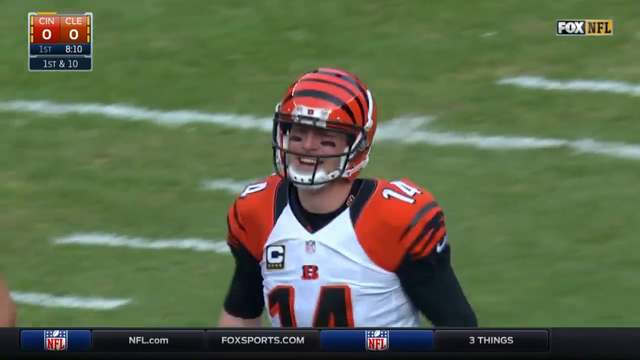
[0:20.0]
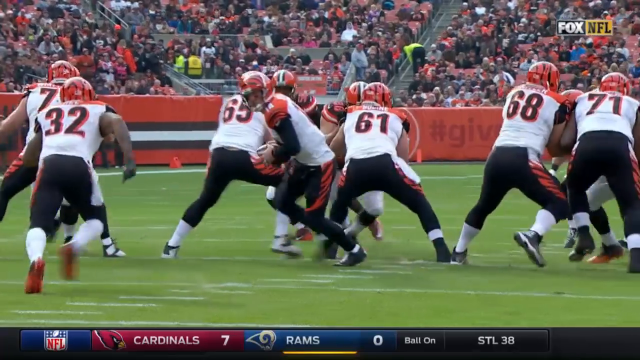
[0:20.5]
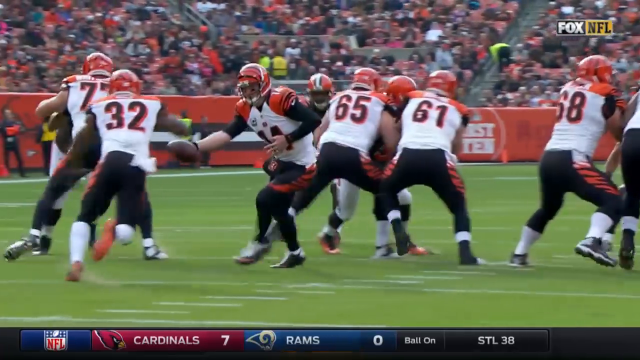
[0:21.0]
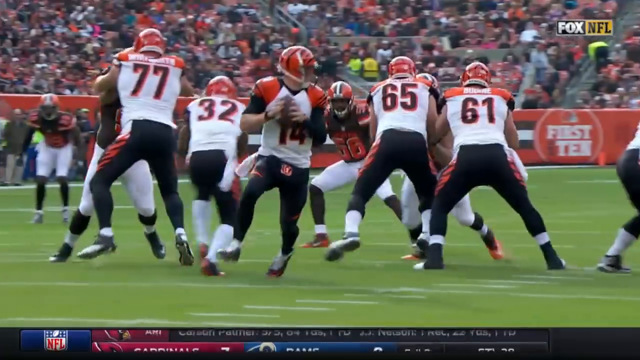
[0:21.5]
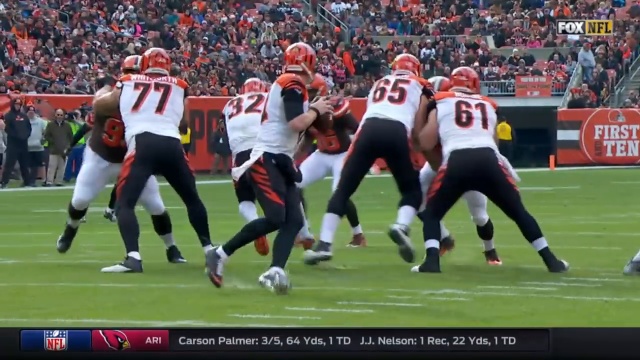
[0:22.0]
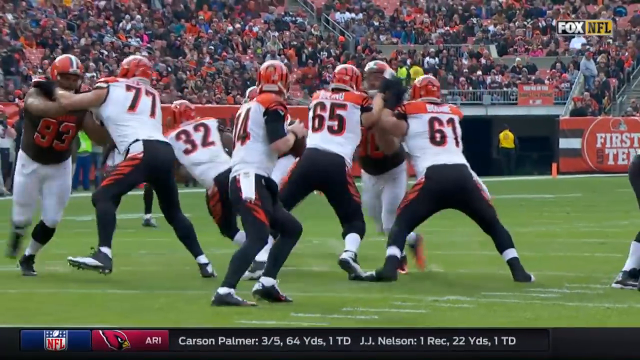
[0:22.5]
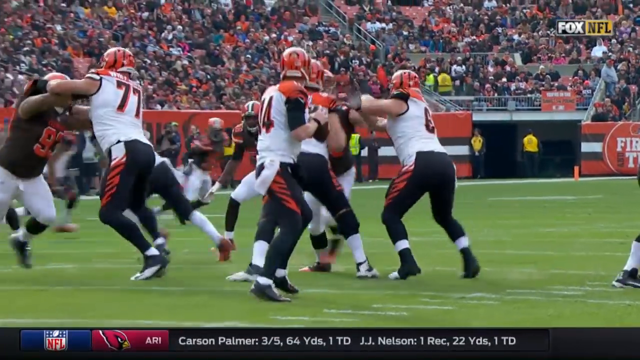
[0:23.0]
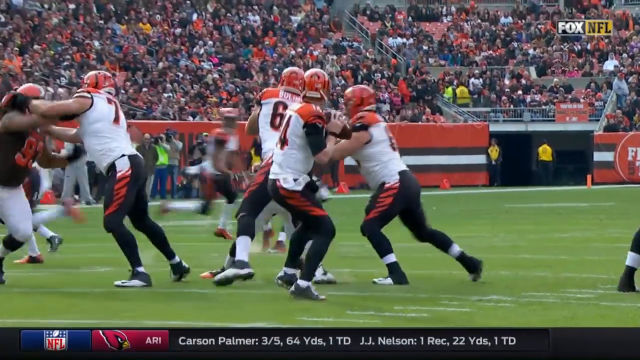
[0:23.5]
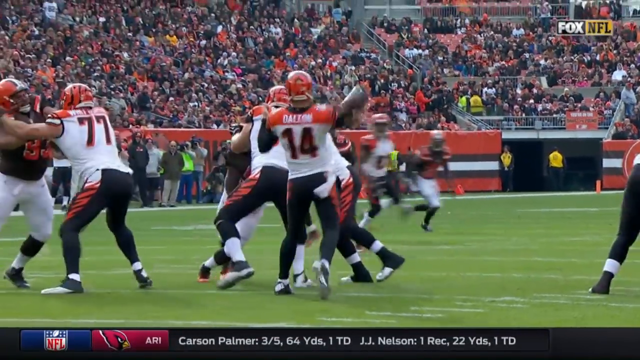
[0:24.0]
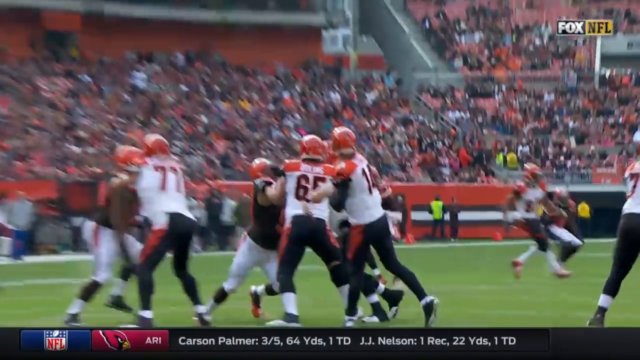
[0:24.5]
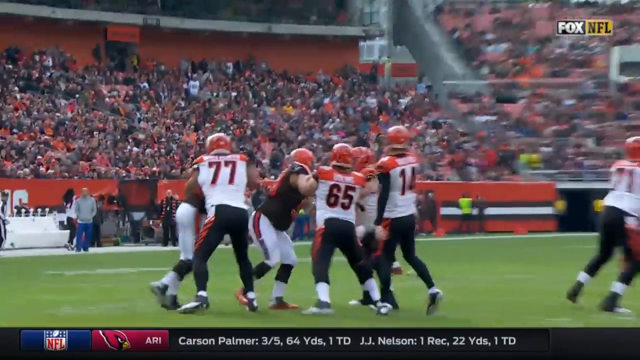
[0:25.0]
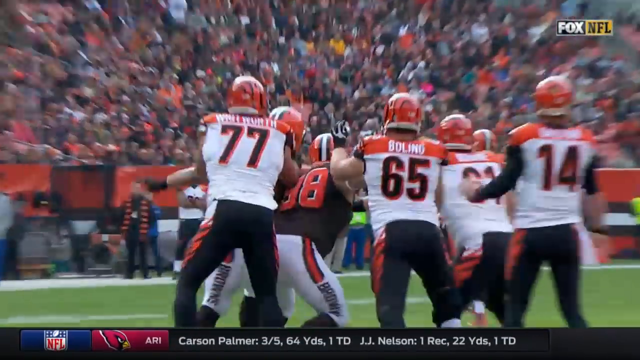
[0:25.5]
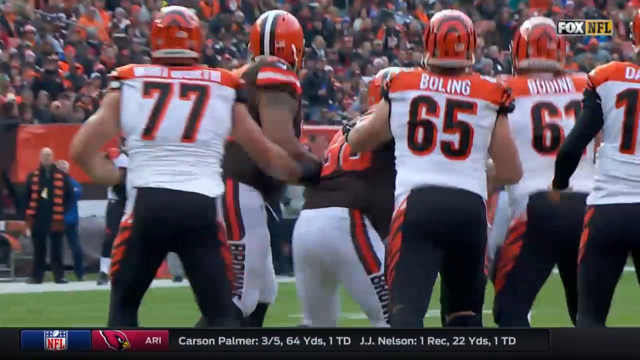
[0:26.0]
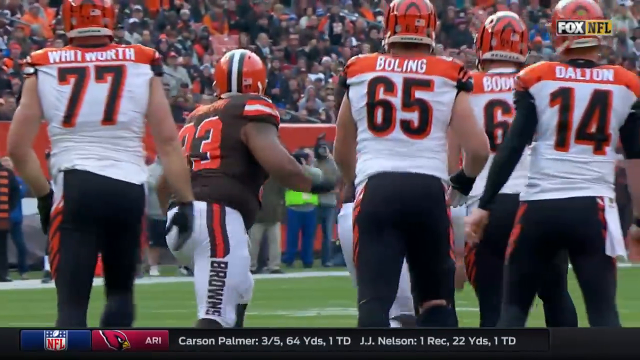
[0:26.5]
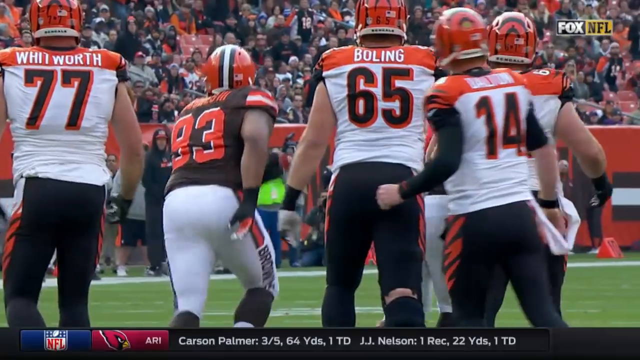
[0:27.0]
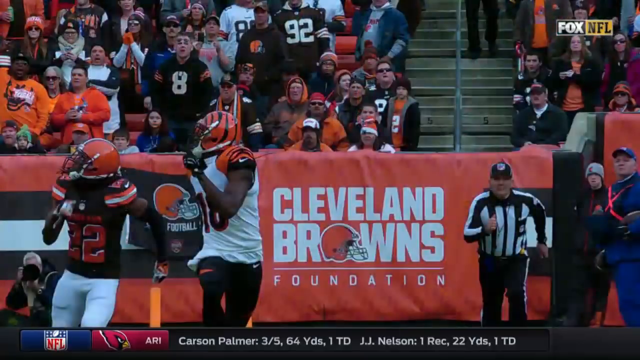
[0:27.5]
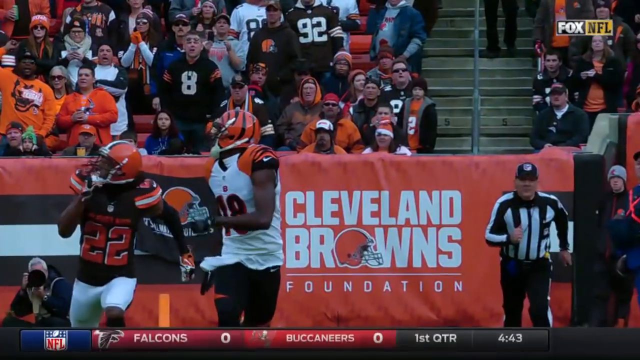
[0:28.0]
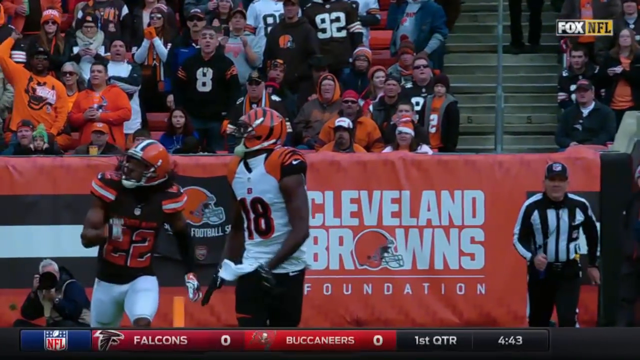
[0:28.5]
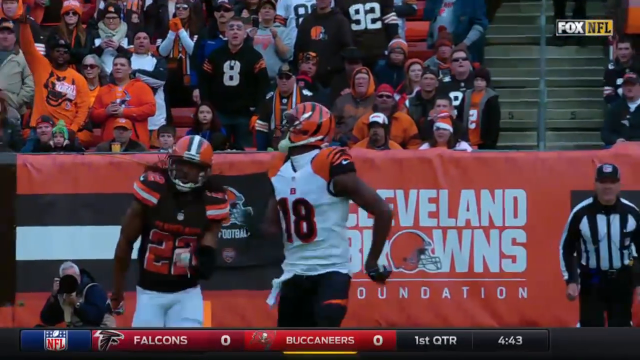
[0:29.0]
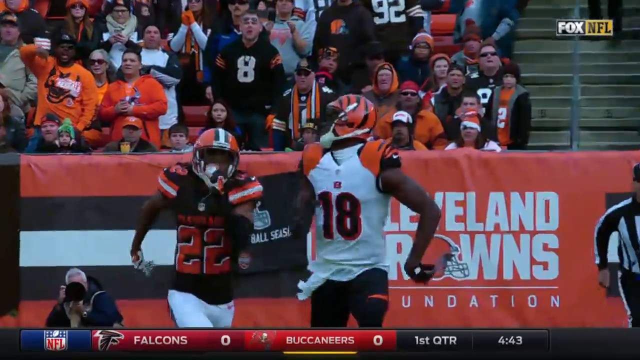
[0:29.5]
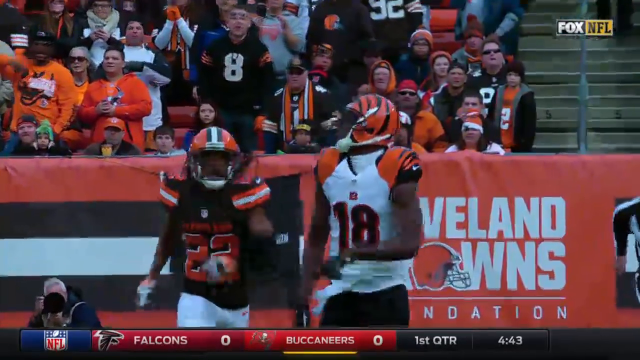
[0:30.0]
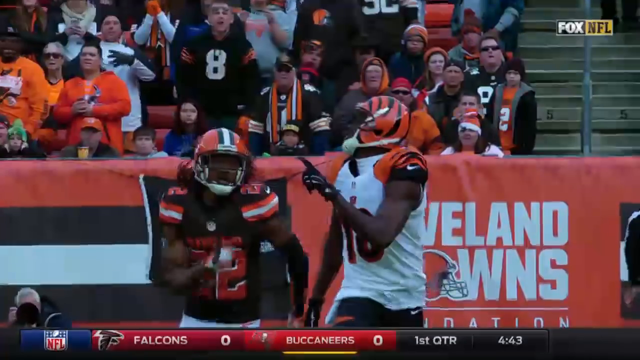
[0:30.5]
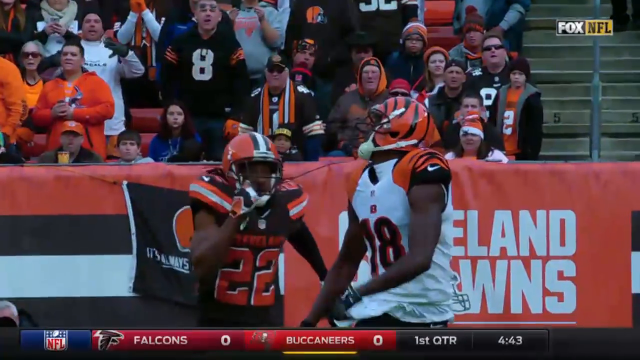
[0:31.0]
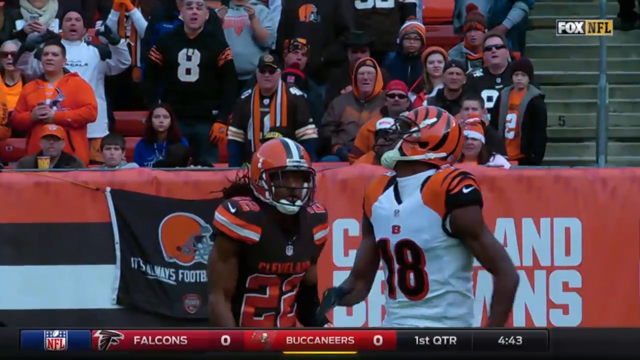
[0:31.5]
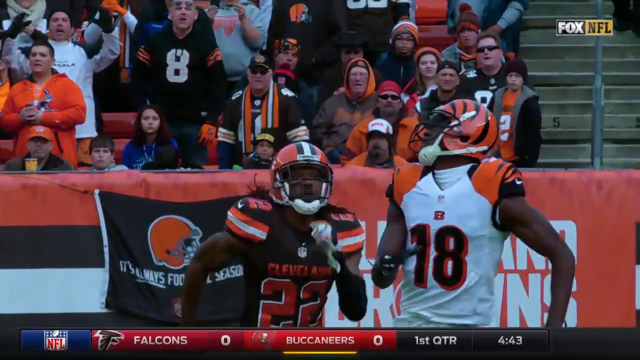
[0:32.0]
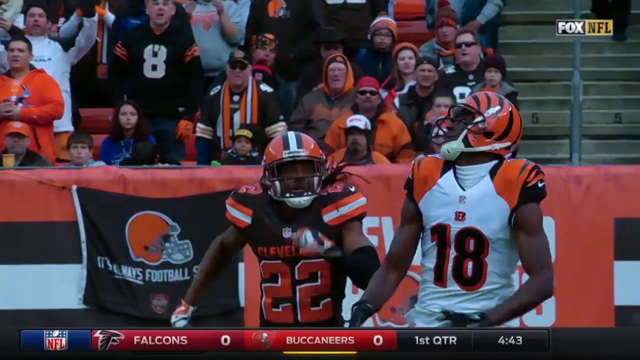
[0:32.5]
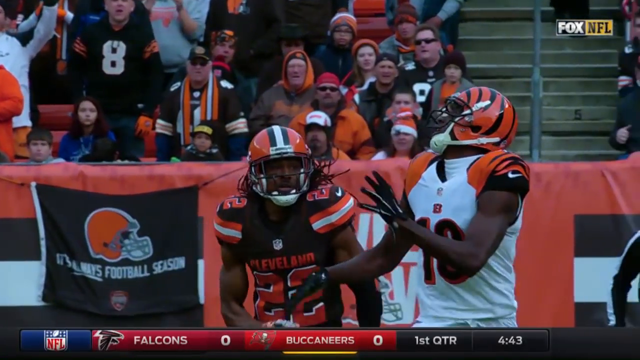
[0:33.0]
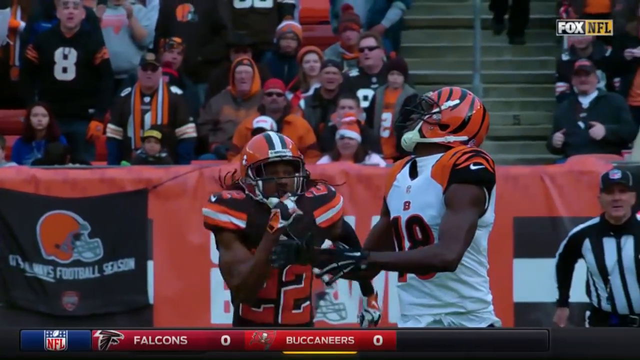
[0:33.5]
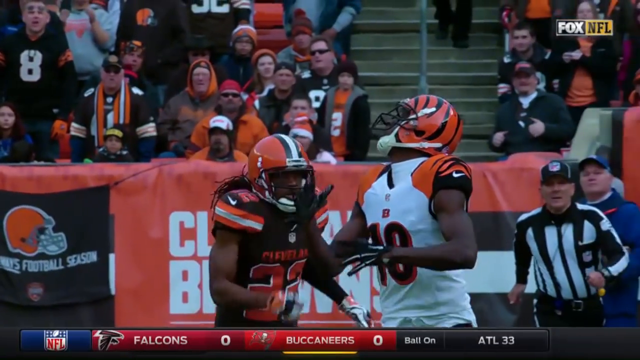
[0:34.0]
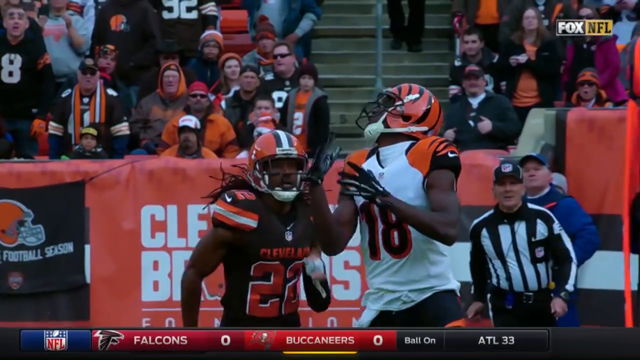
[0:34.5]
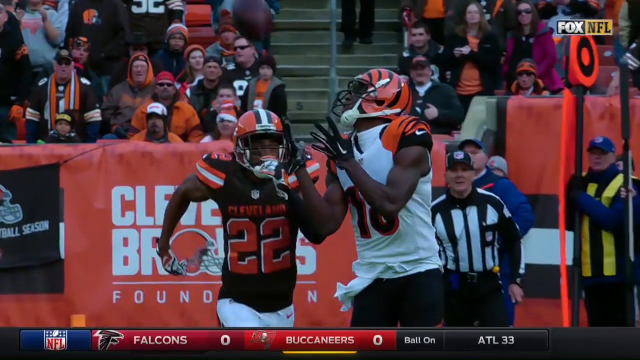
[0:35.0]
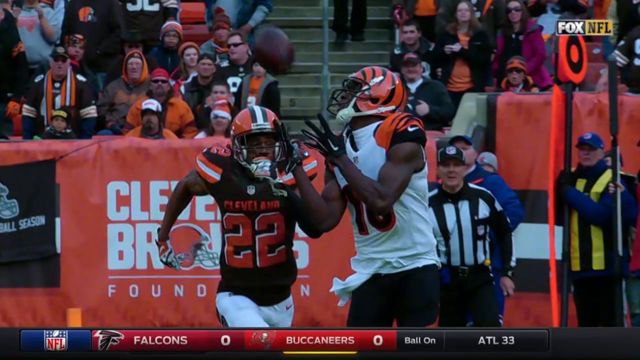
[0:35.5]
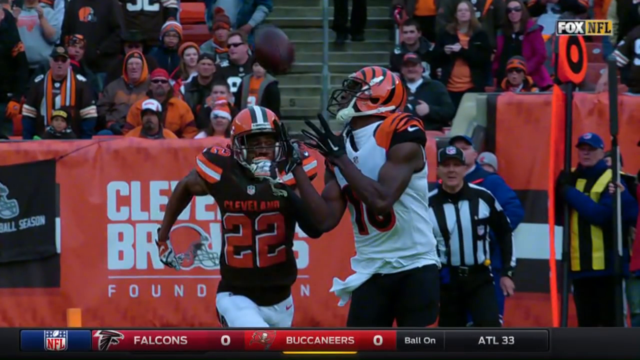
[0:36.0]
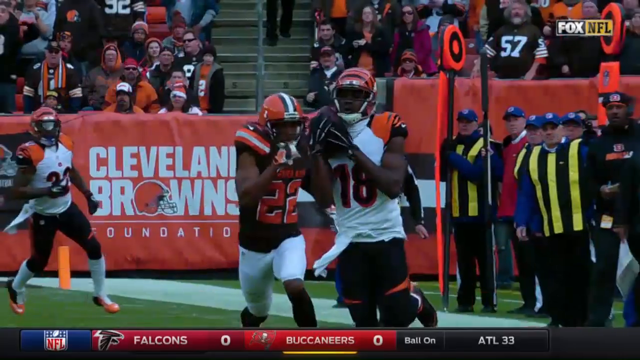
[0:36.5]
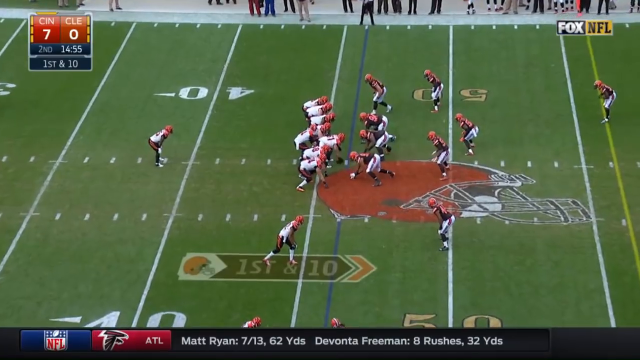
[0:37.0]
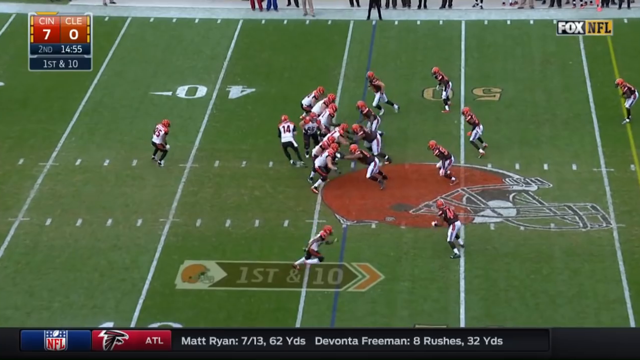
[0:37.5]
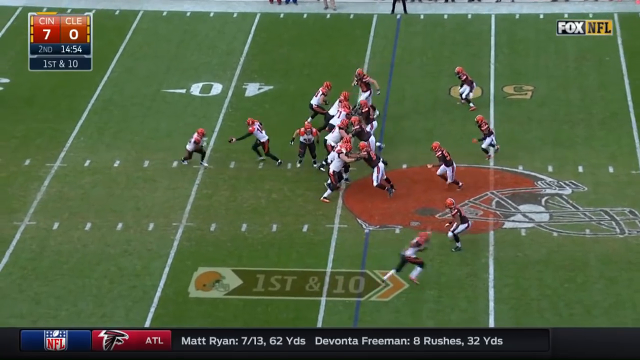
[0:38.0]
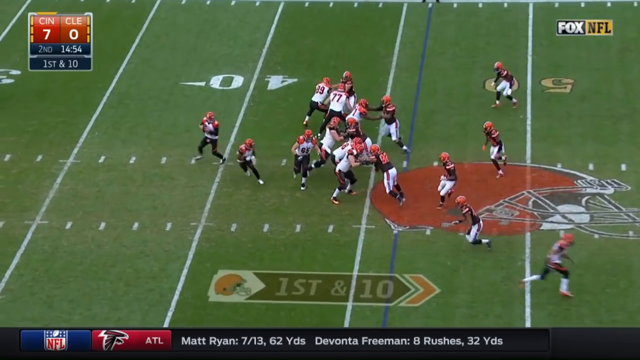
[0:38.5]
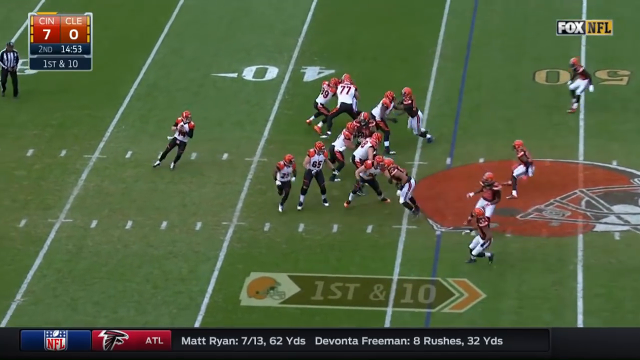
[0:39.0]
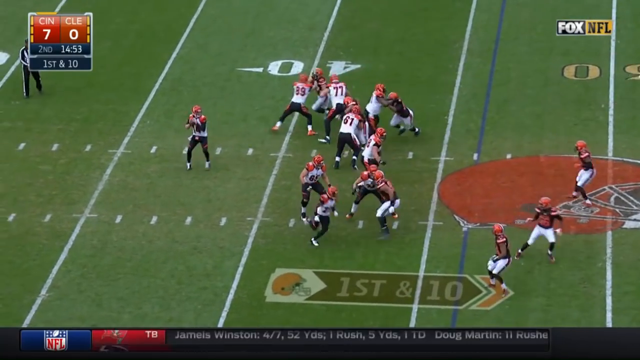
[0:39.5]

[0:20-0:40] An action replay shows the Bengals' play. The game takes place in an outdoor stadium, and it looks fairly bright. The quarterback, Andy Dalton, is protected by offensive linemen numbers 65 and 77 and looks down the field as the pass sails through the air. During the replay, stats appear for Arizona Cardinals quarterback Carlson Palmer: three completions from five attempts, 64 passing yards and one touchdown; JJ Nelson has one catch for a 22-yard touchdown. A close-up shows Bengals wide receiver number 18, who has outpaced Browns defensive back number 22. Stats then appear for Atlanta Falcons quarterback Matt Ryan, with seven completions from 13 attempts for 62 yards, and teammate Devonta Freeman with eight rushes for 32 yards.